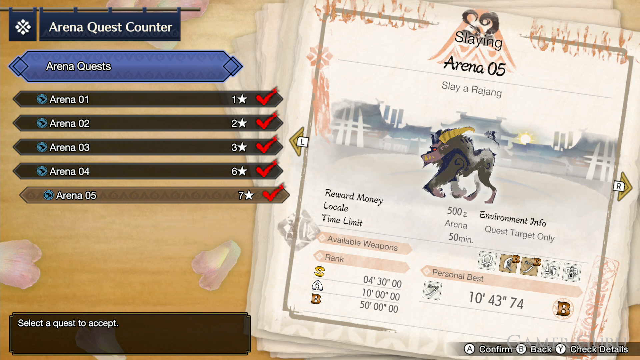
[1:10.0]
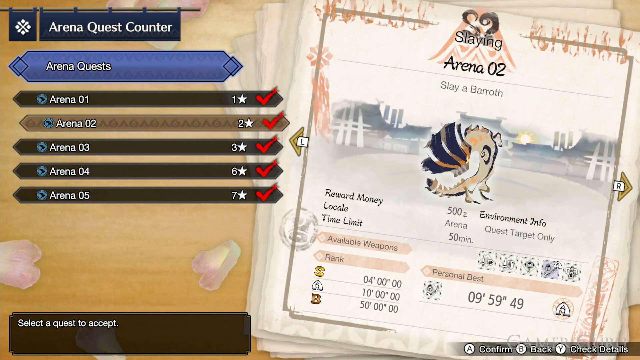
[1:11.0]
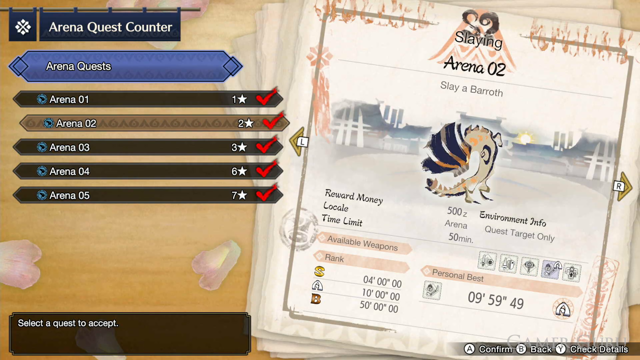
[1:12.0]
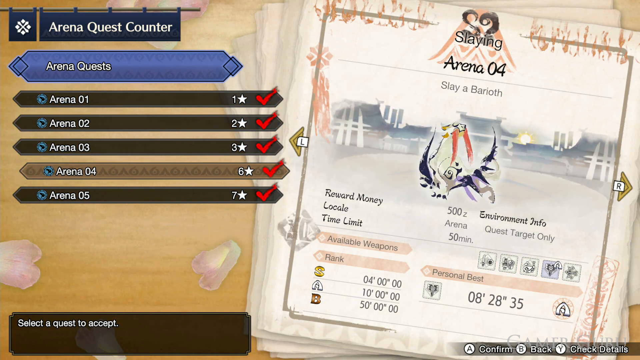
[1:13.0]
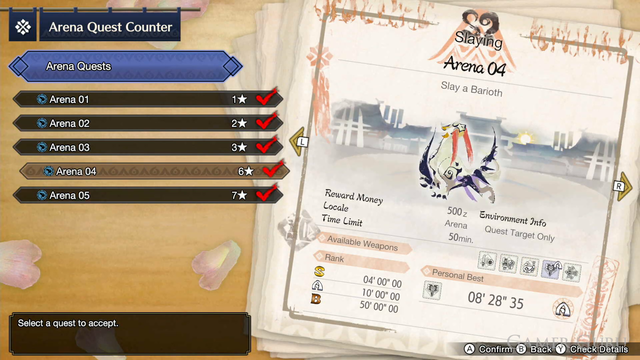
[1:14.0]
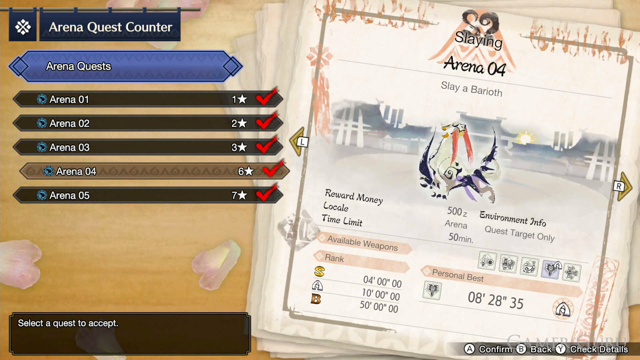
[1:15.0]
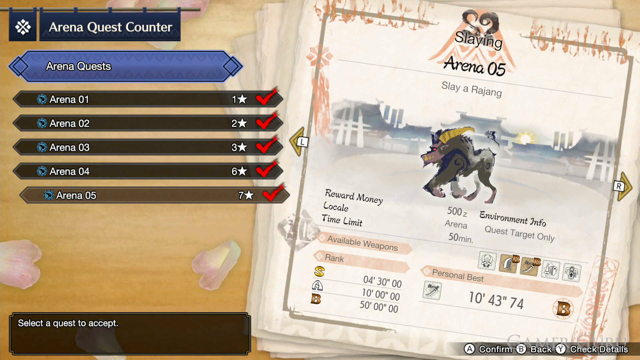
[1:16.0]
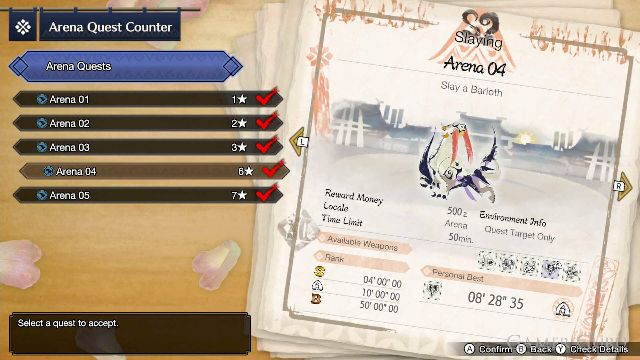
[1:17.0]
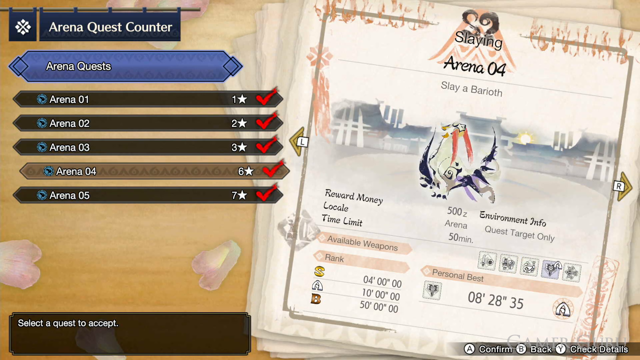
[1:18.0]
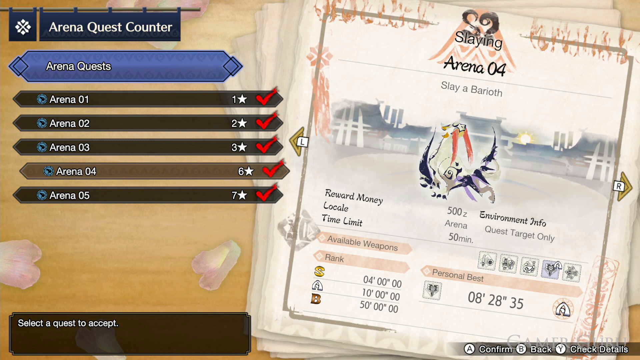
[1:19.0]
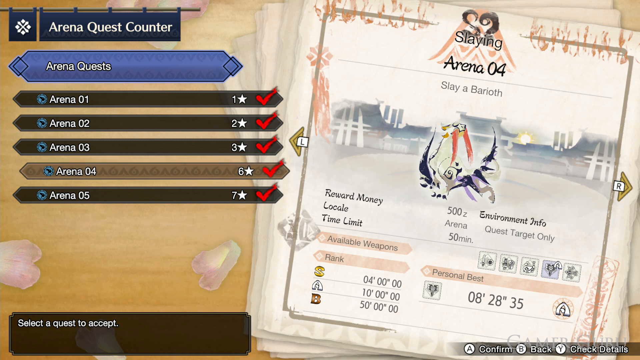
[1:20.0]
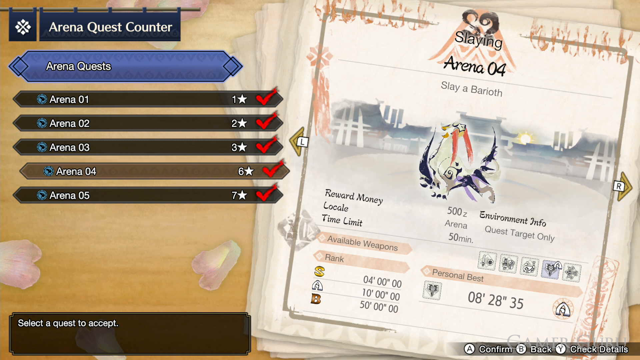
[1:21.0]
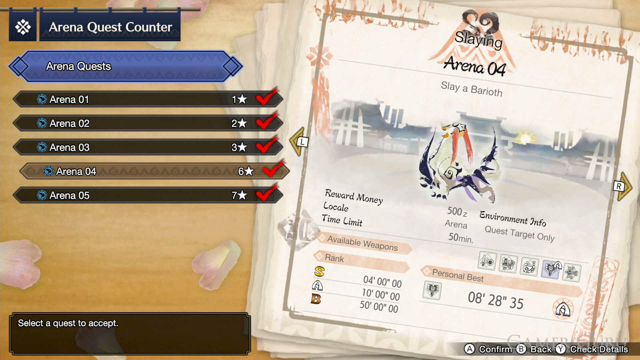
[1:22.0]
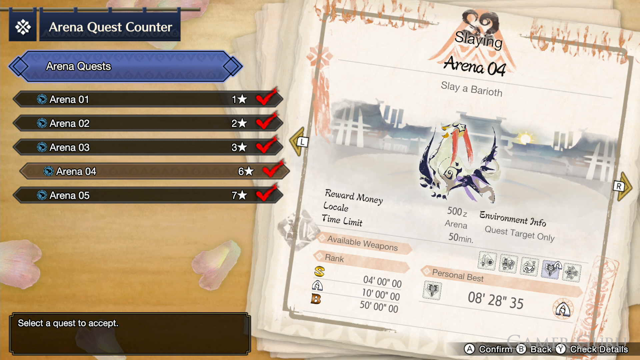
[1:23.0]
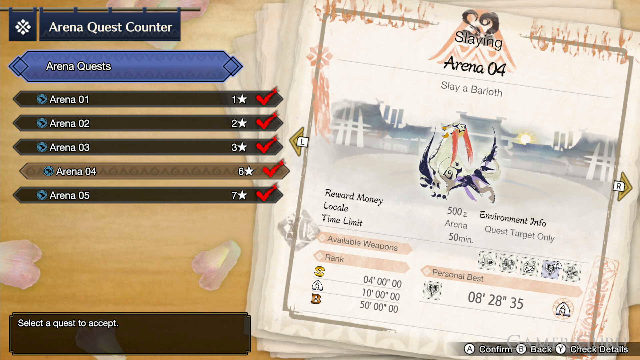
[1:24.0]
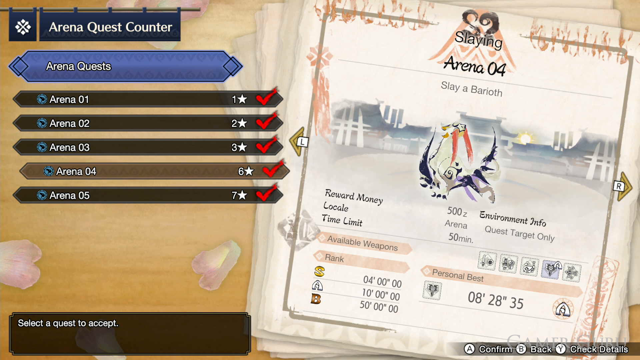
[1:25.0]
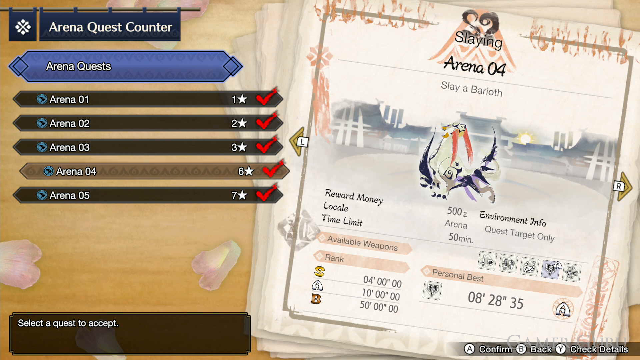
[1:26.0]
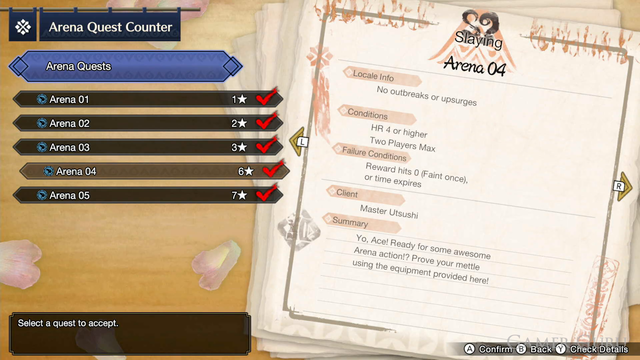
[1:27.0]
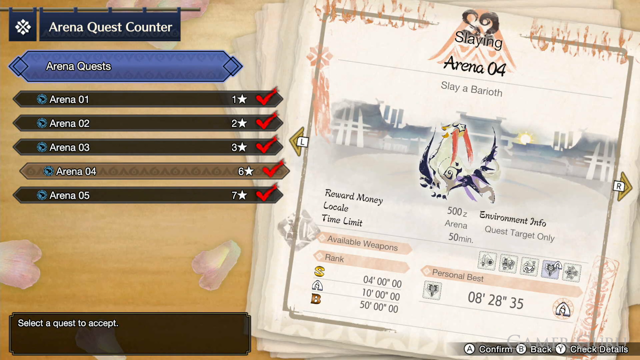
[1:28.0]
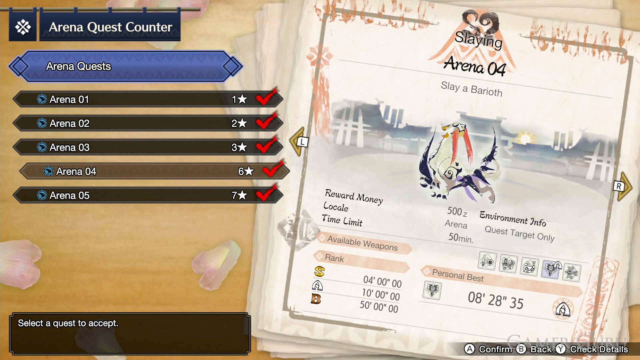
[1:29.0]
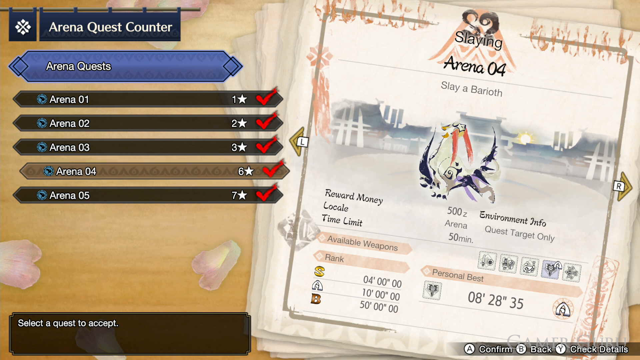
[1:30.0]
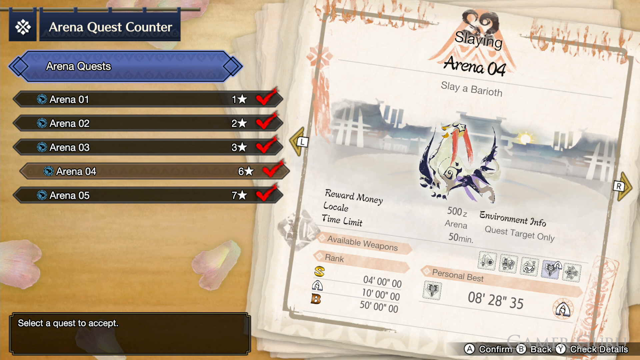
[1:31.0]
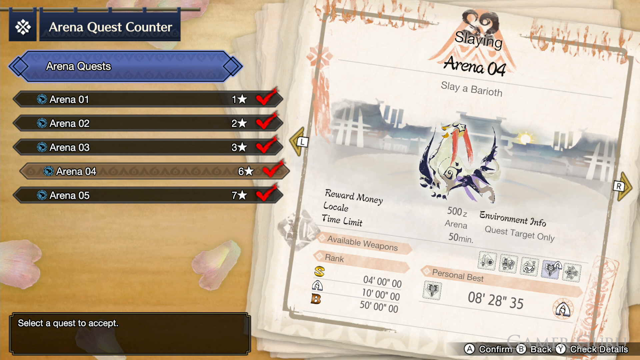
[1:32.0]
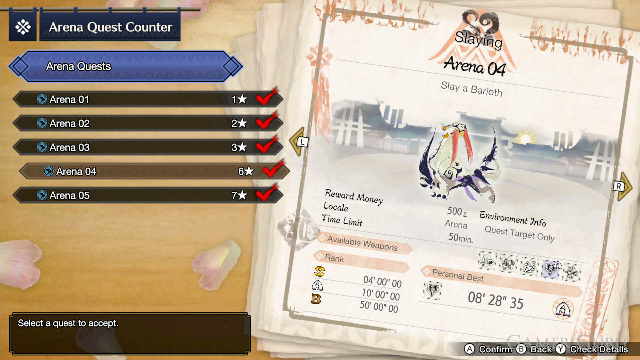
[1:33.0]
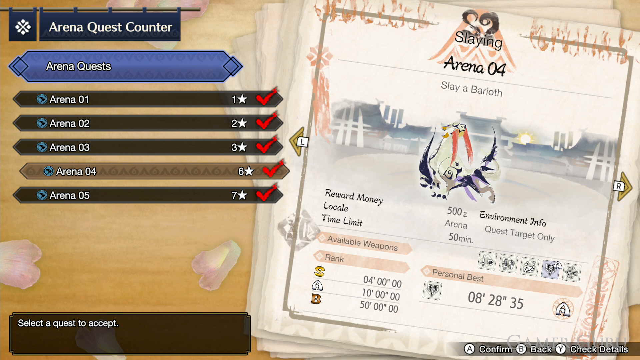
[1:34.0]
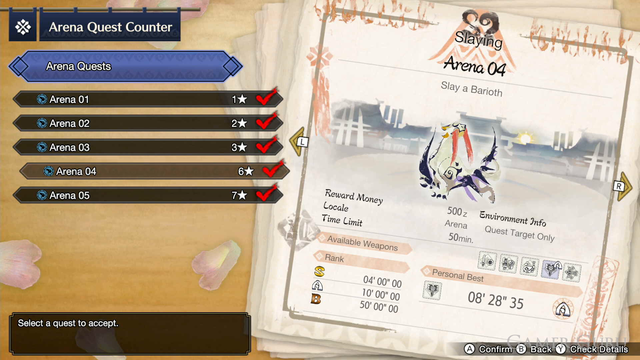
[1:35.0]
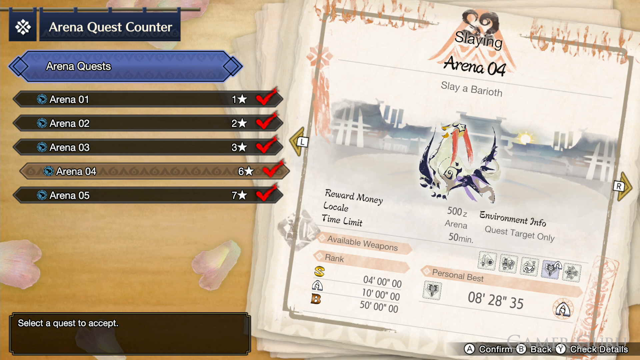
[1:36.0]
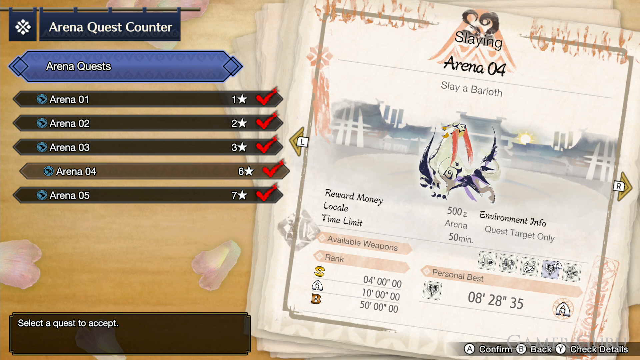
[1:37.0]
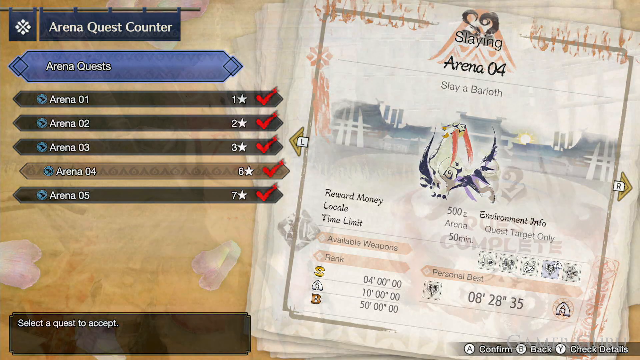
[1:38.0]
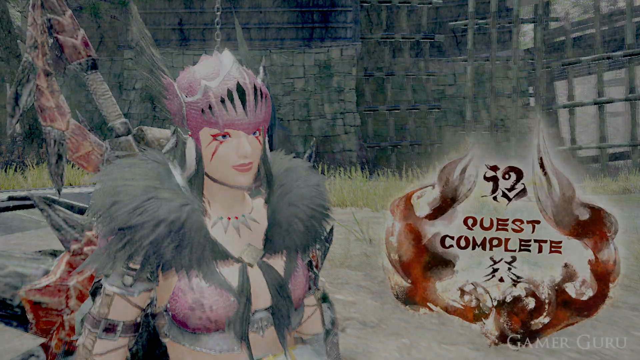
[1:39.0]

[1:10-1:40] At the top left of the screen, a blue banner with white letters reads "arena quest counter," with "arena quests" below it: Arena 1 one star, Arena 2 two stars, Arena 3 three stars, Arena 4 six stars, Arena 5 seven stars. On the right, the screen shows Arena 5 with reward money 500 Z, locale arena, time limit 50 minutes, and a personal best of 10 43 74, unclear whether hours or minutes. The player flips through different things that can be slain in the arena. Next it shows "Slay a Barroth," reward money 500 Z, locale arena, time limit 50 minutes, environment info "quest target only," personal best 08-28-35. Another screen reads "no outbreaks or upsurges," conditions "HR4 or higher" and "two player max," failure conditions "reward hits zero, faint once or time expires," client "master sushi," and a summary: "yo ace ready for some awesome arena action prove your metal using the equipment provided here."